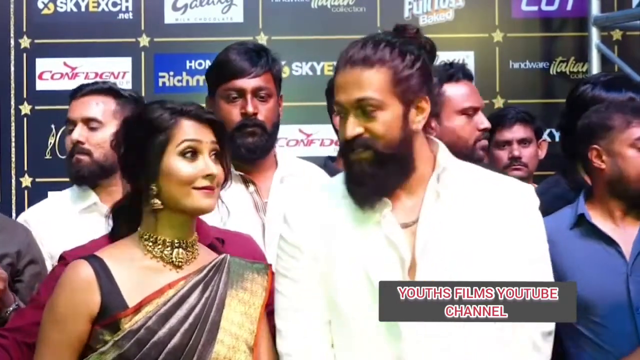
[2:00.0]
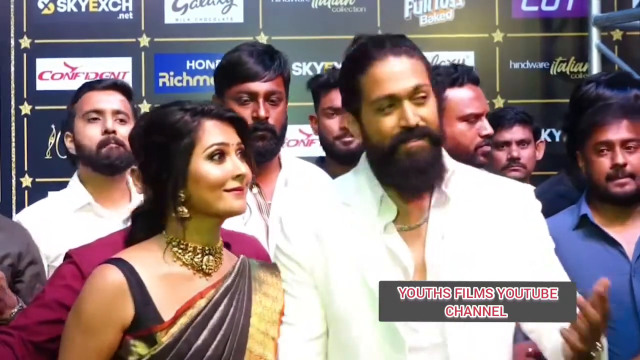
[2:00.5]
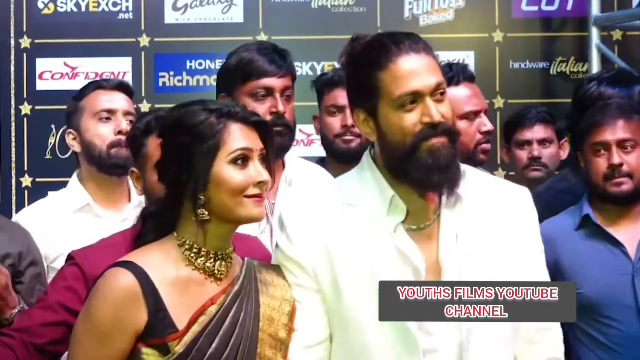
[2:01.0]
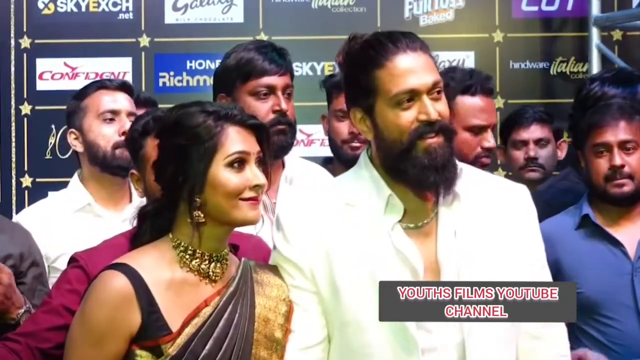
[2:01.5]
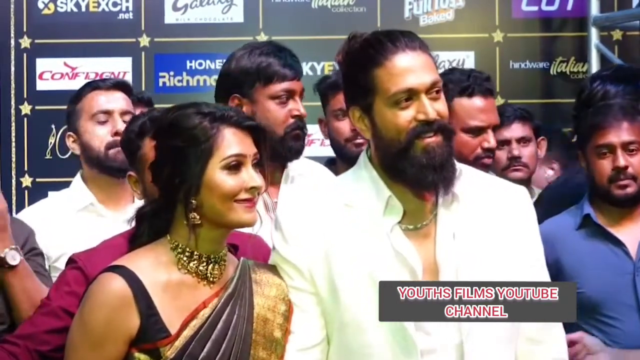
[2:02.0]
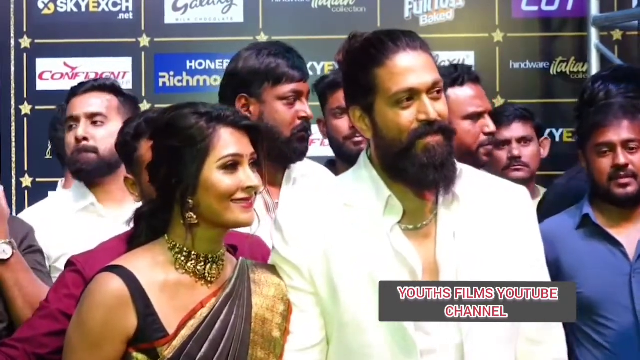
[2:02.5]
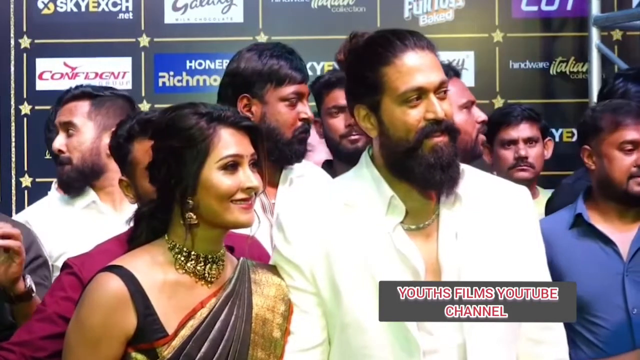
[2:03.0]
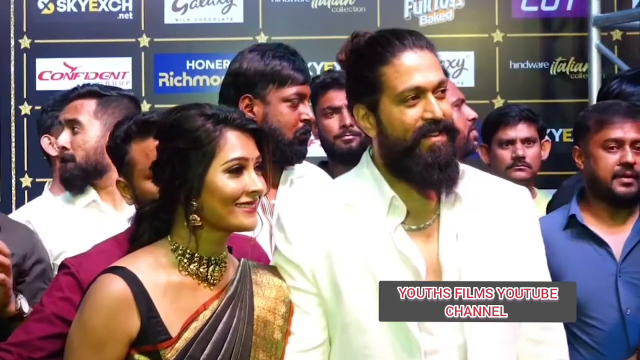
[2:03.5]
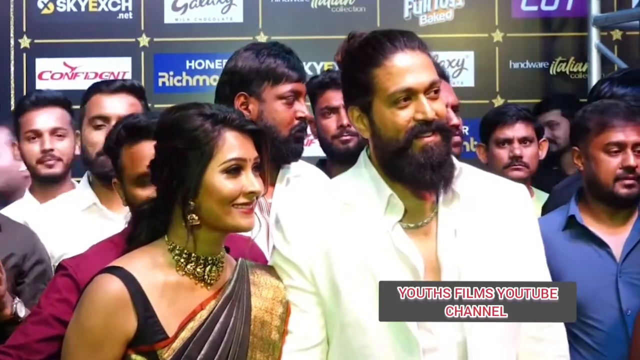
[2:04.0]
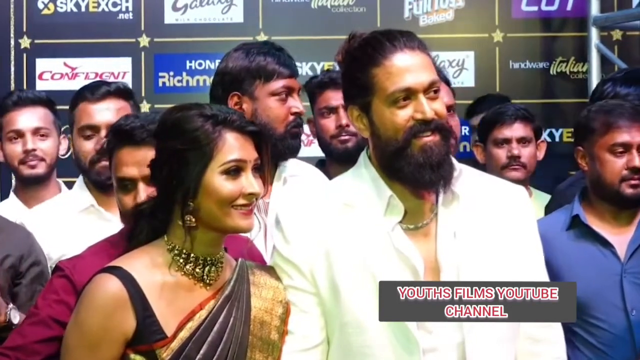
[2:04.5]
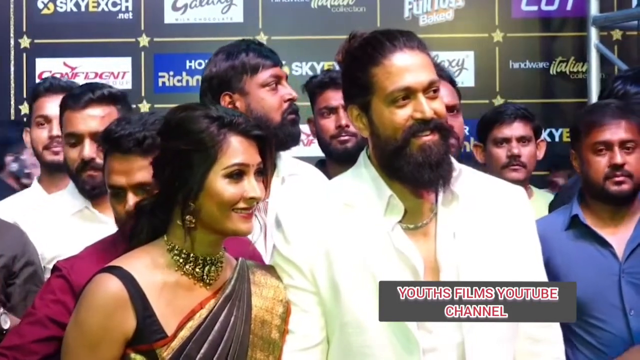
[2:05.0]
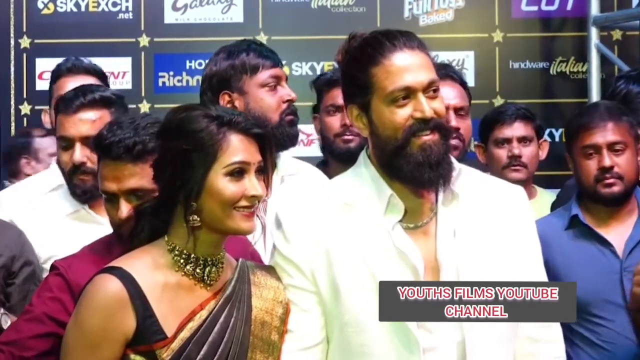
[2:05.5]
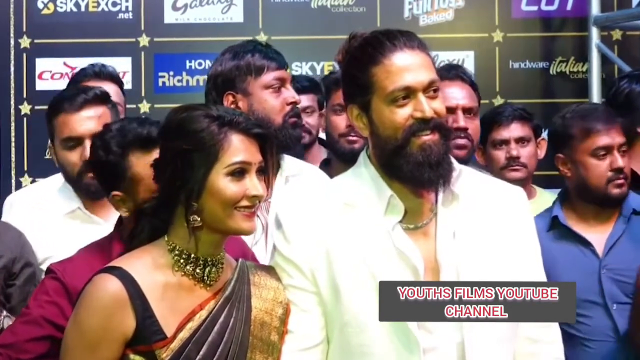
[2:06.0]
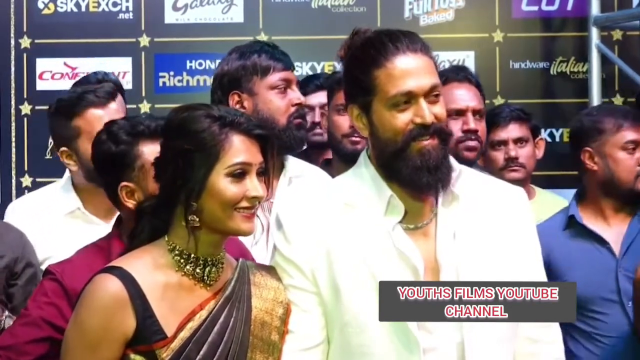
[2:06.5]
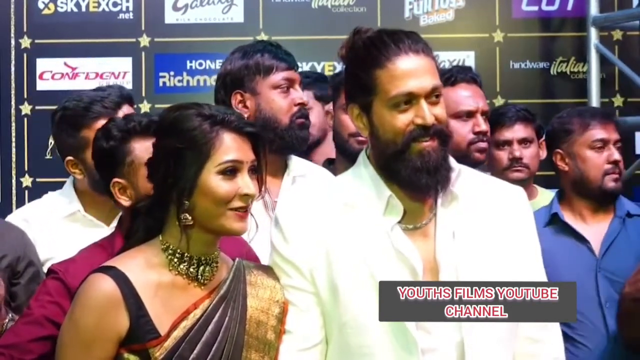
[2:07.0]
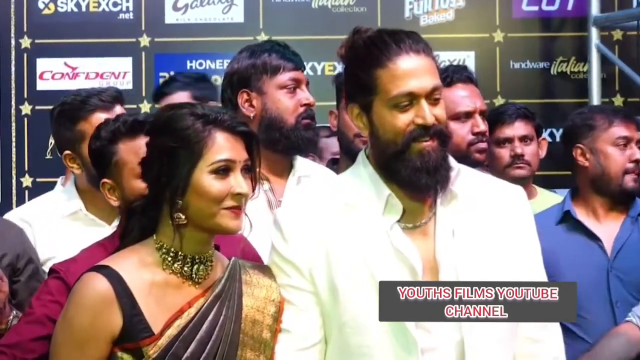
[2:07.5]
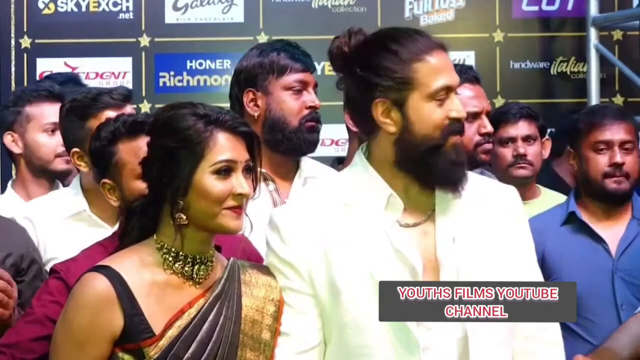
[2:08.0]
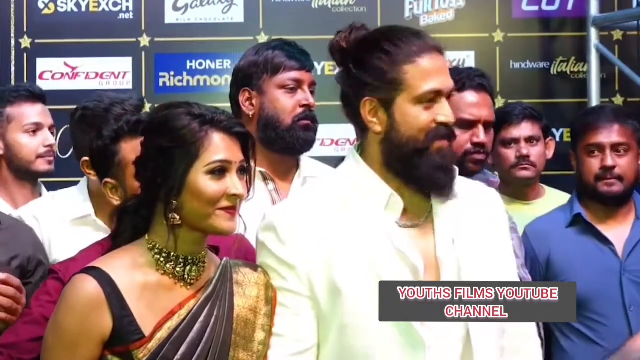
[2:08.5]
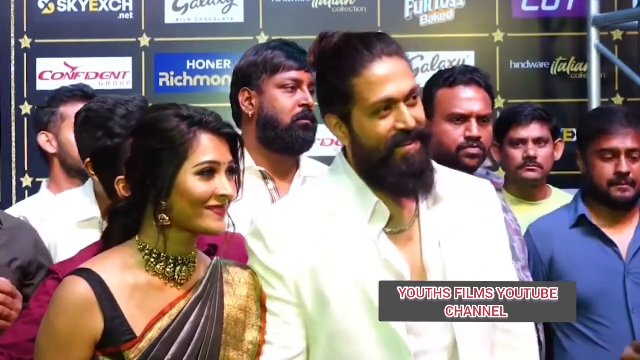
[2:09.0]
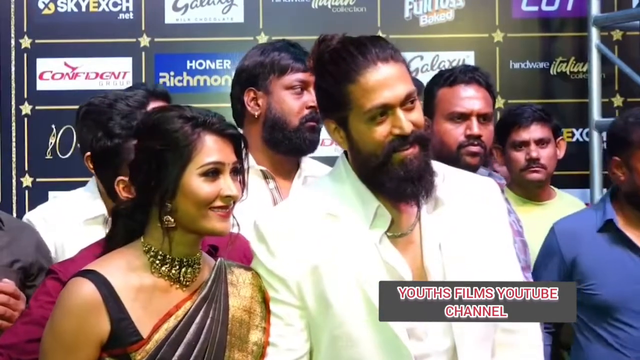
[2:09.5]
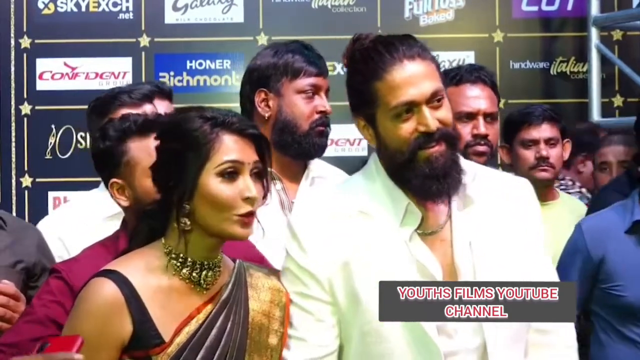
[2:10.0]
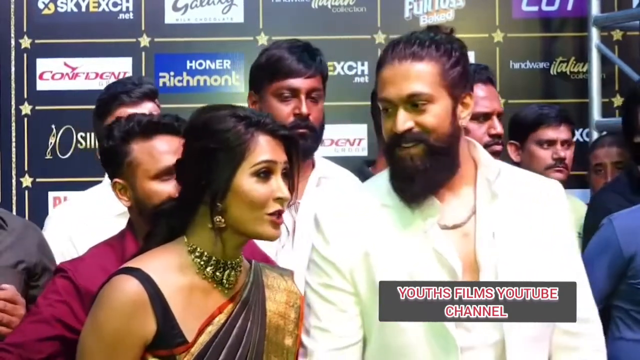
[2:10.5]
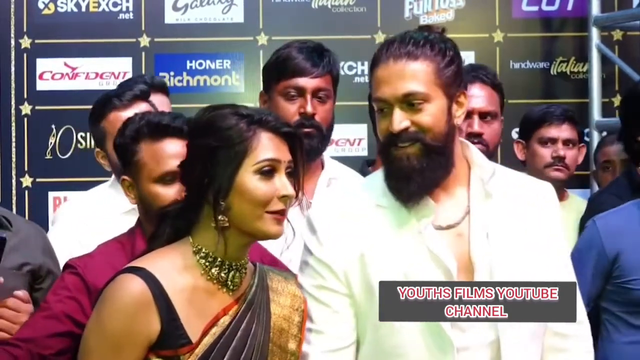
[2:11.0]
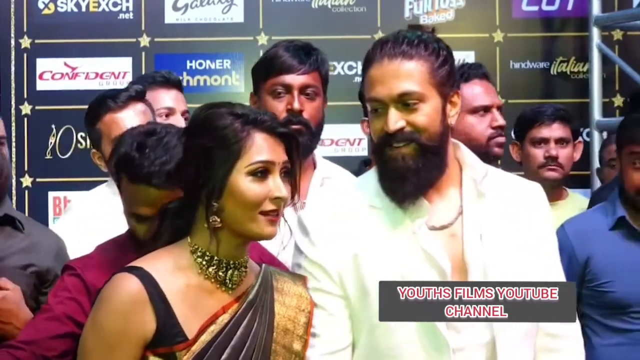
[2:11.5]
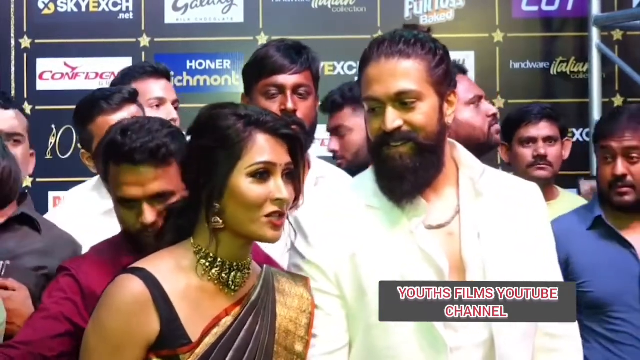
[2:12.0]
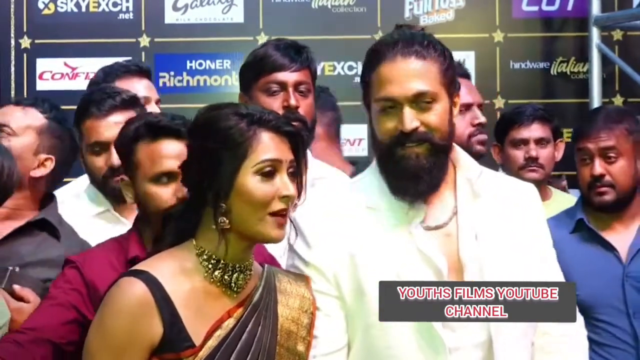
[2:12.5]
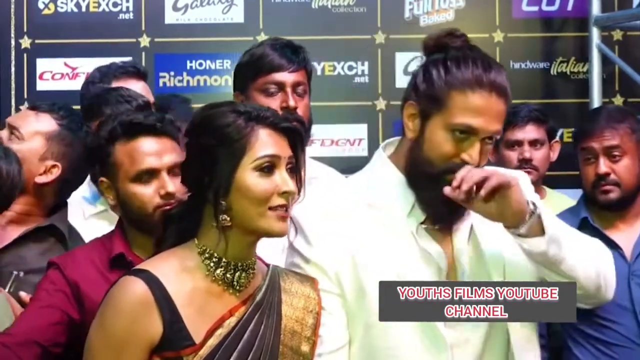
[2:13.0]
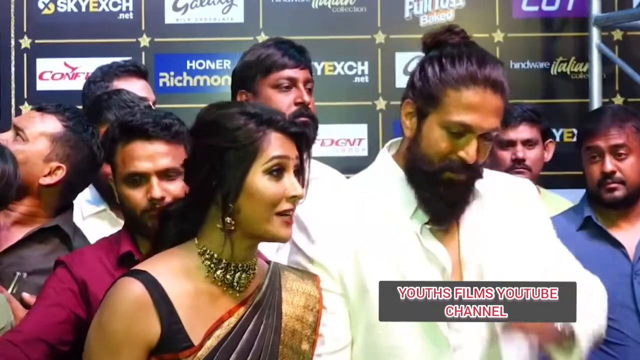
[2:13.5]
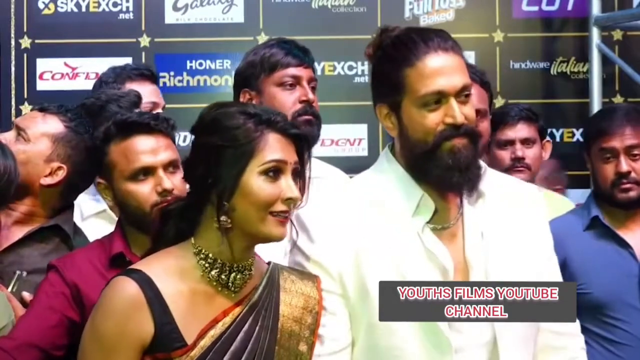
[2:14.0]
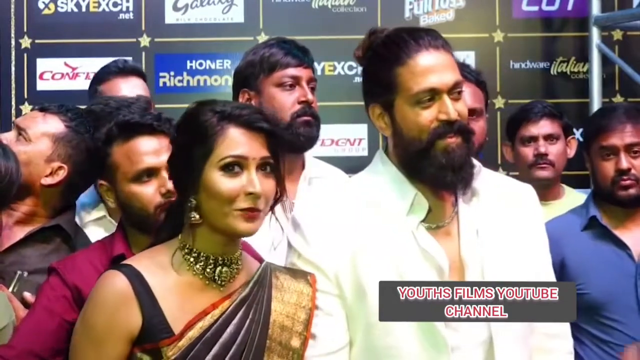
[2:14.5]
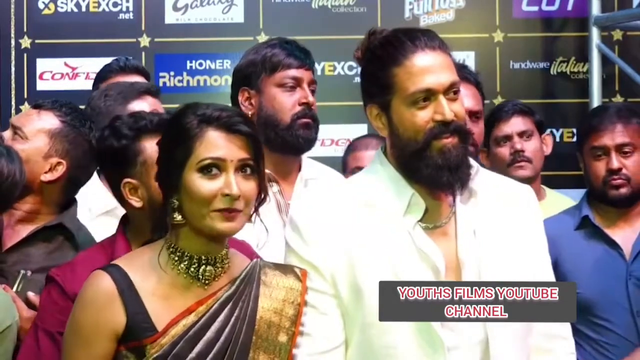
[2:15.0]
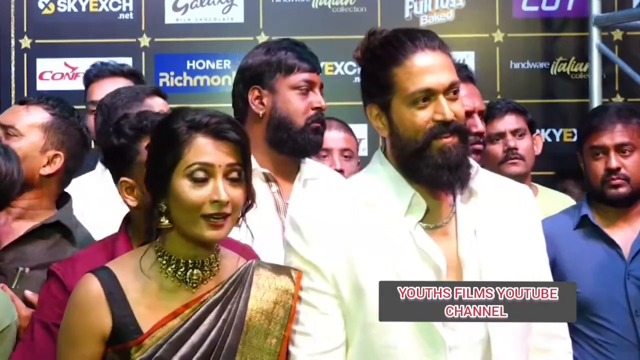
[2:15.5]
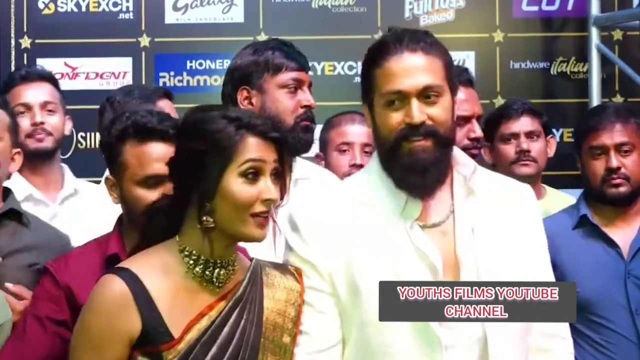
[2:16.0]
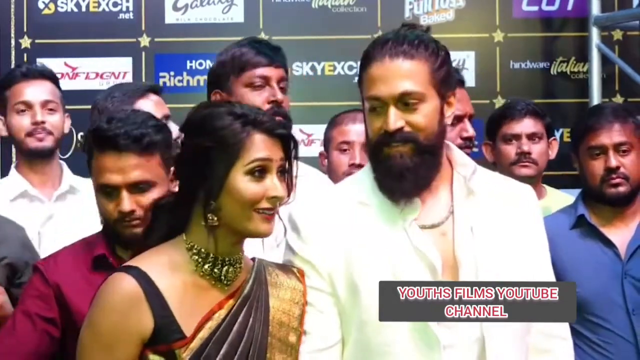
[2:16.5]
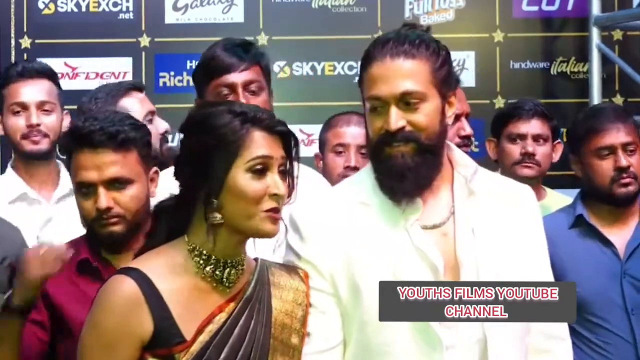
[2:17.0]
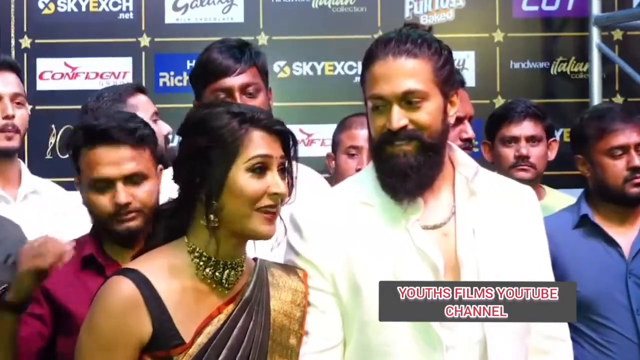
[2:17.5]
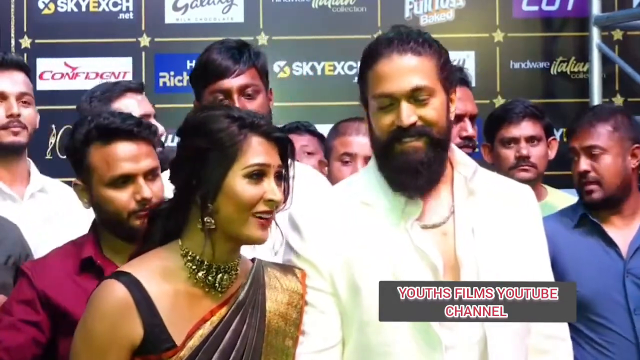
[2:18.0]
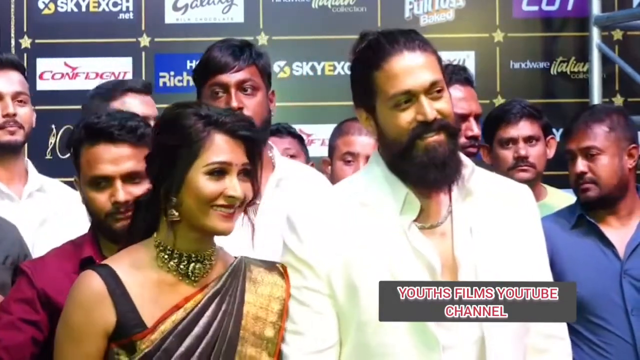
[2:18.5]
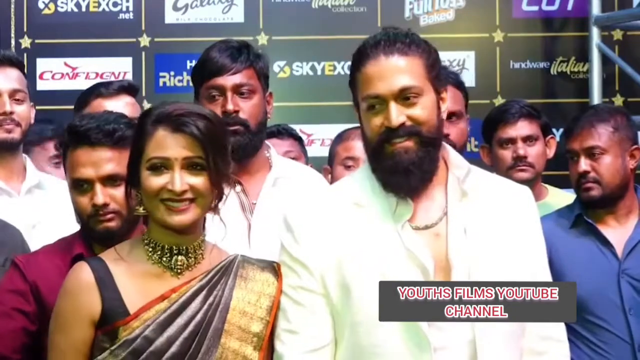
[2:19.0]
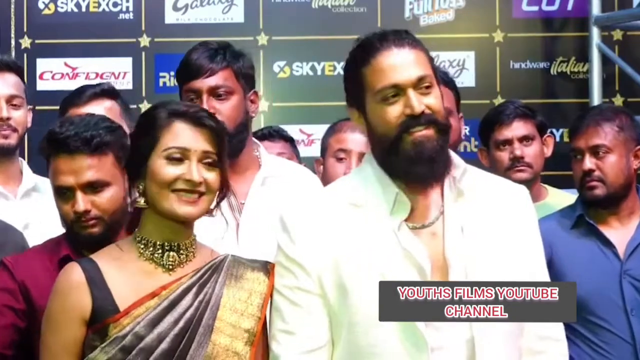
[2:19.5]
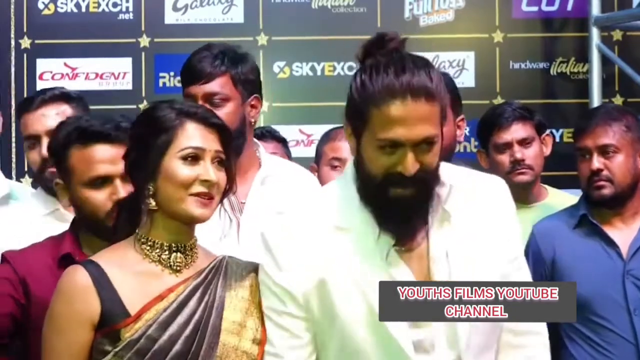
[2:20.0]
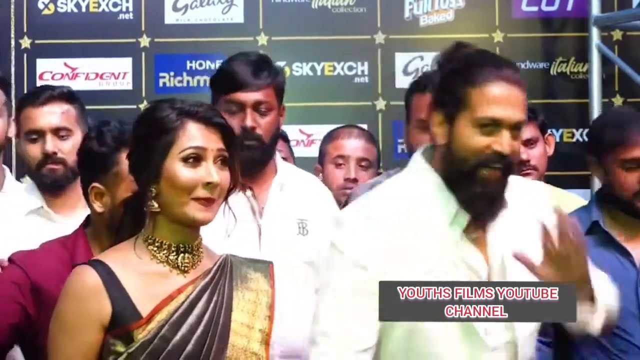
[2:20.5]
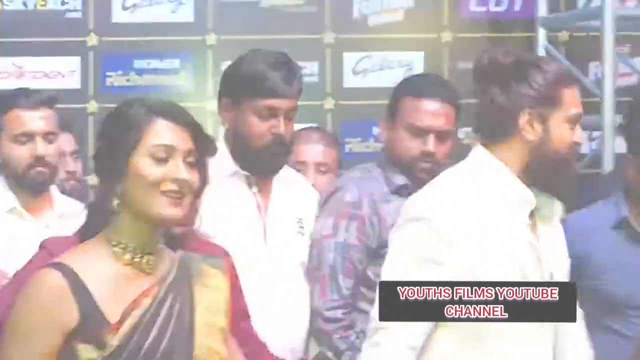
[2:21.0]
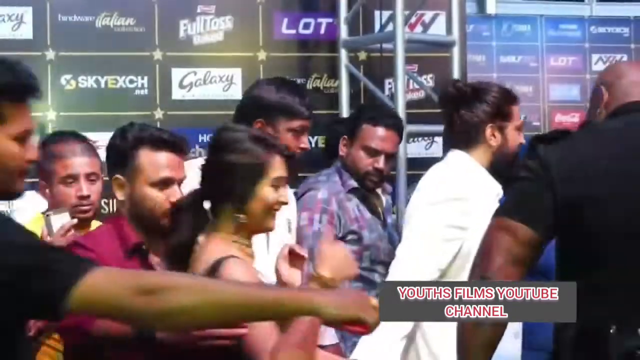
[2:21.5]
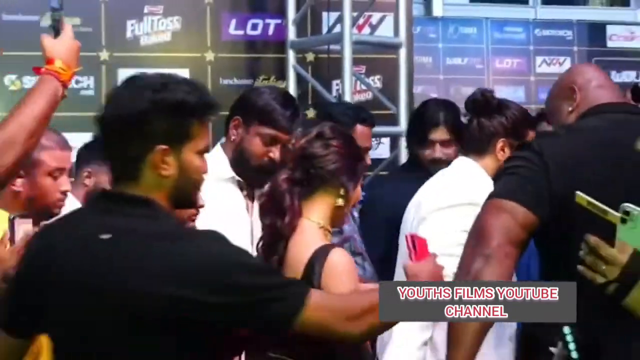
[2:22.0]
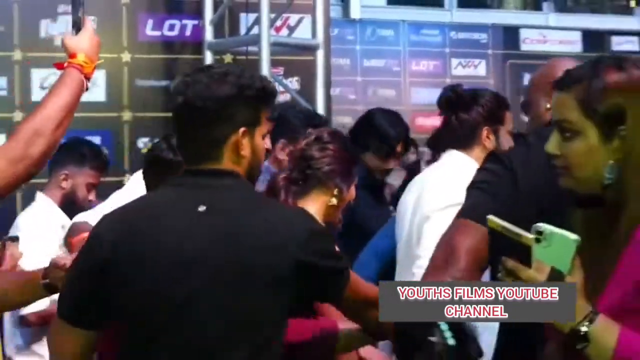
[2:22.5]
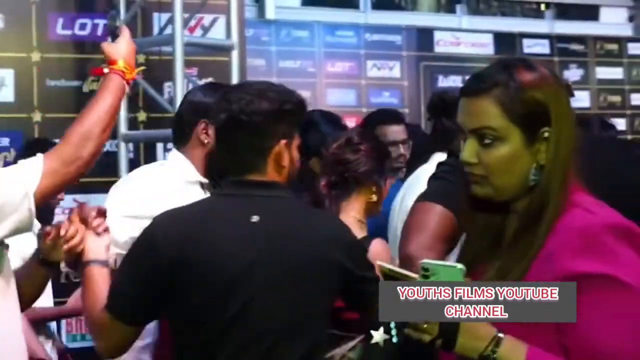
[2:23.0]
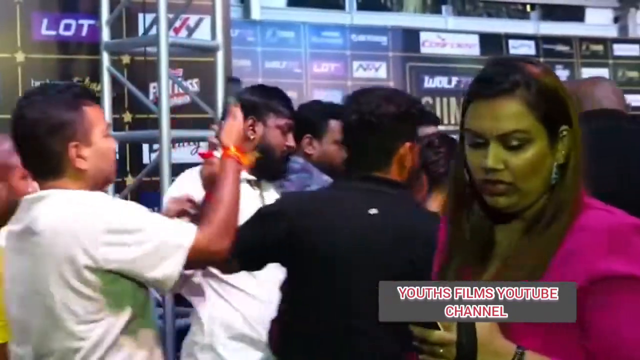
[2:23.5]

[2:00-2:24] The couple, who are pretty young, is interviewed by the press at some kind of event; what type of event is unclear. The man wears a white suit unbuttoned down to the middle of his chest and a gold chain, and has a full beard and dark hair tied up into a bun; he smiles and nods. The woman, in a golden gray sari, nods and answers questions from the press, smiling as she speaks and glancing at the camera while talking. A group of men behind them seems to be helping keep them moving along, maybe on a red carpet. Then the couple departs quickly, waving to the cameras, interviewers and photographers as they make their way out of the scene. The camera cuts, and they are seen from a greater distance walking away.